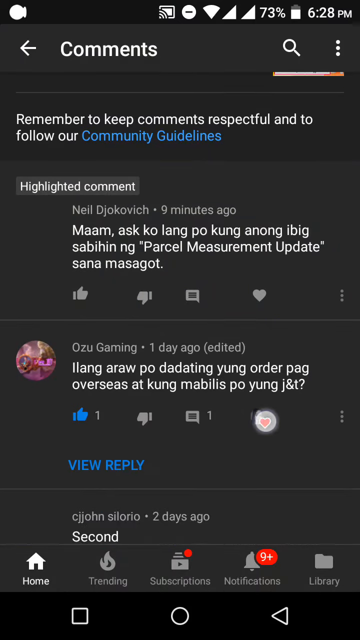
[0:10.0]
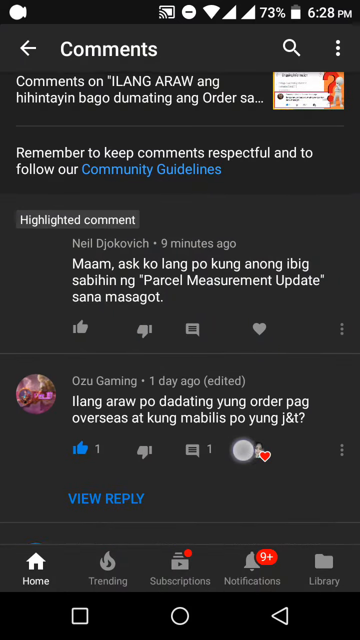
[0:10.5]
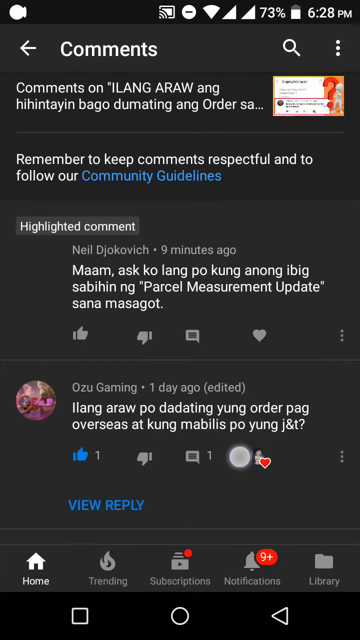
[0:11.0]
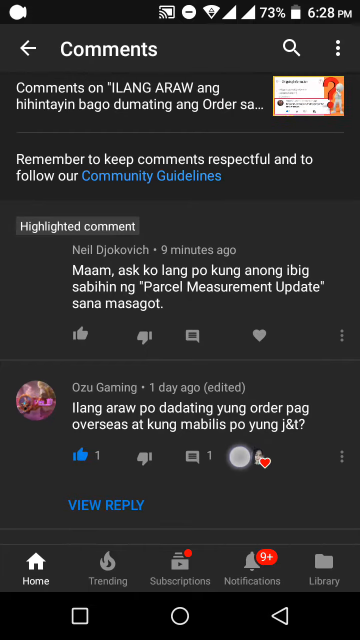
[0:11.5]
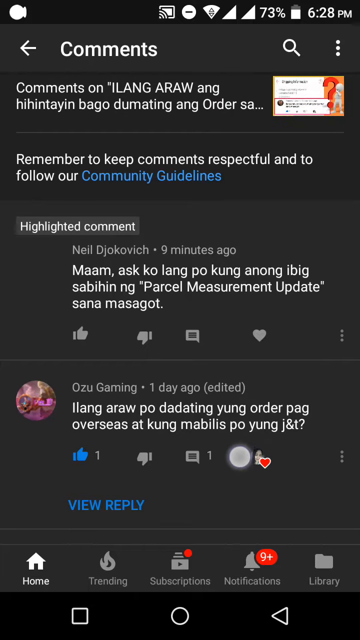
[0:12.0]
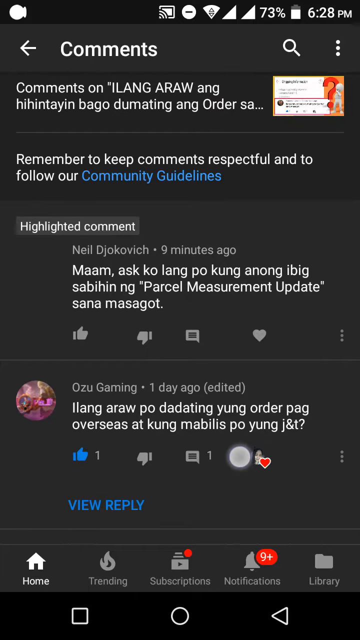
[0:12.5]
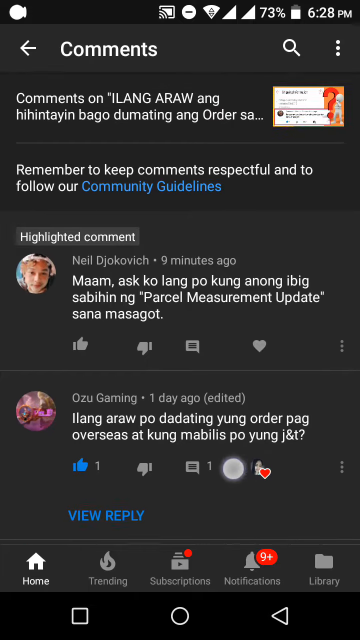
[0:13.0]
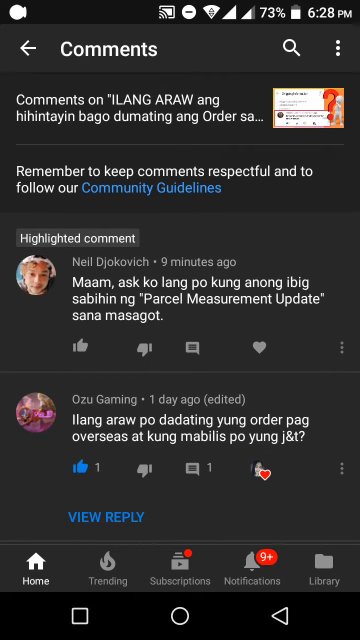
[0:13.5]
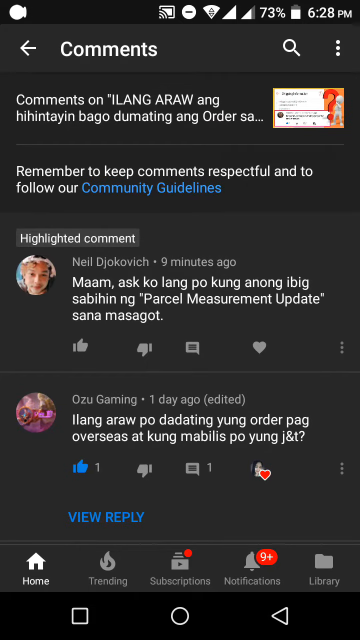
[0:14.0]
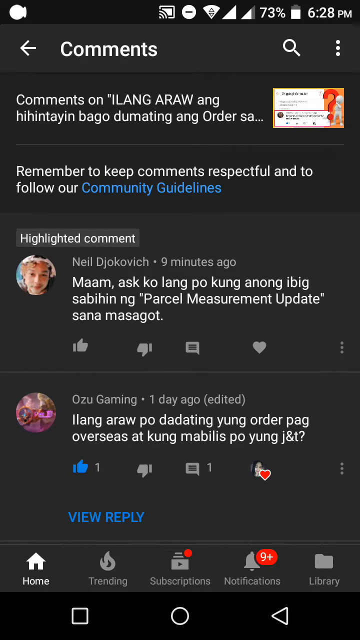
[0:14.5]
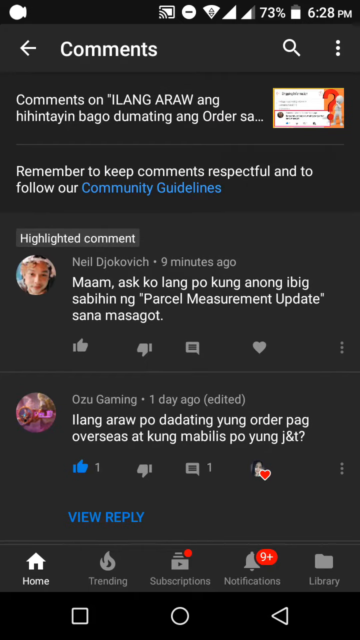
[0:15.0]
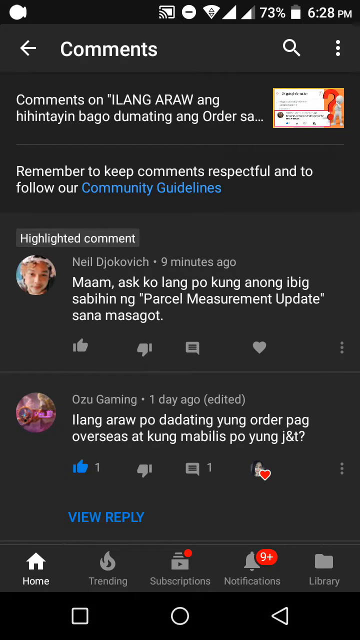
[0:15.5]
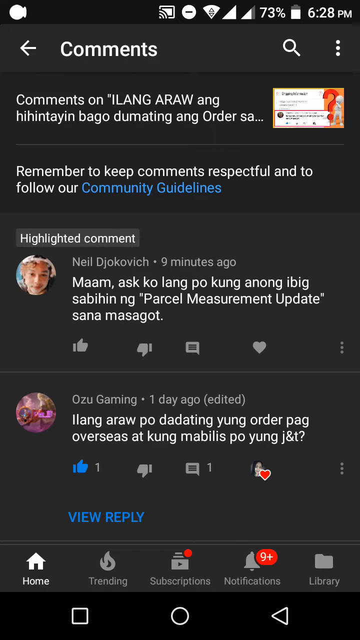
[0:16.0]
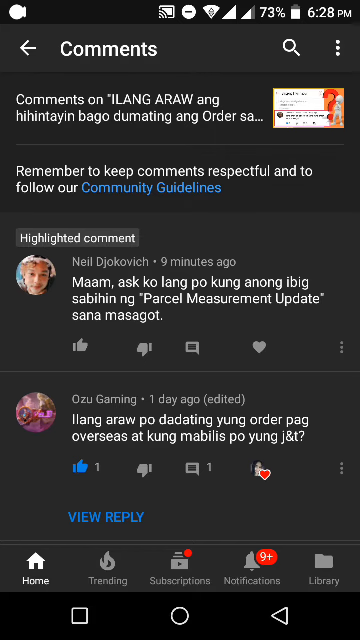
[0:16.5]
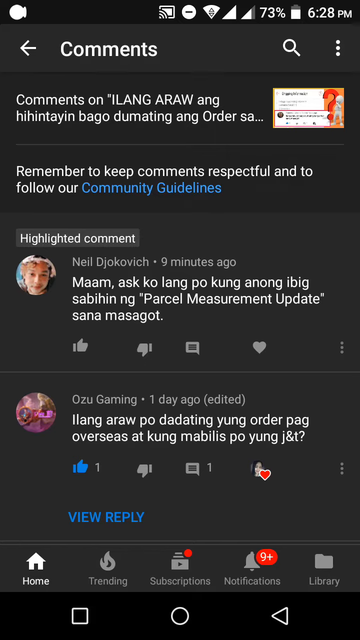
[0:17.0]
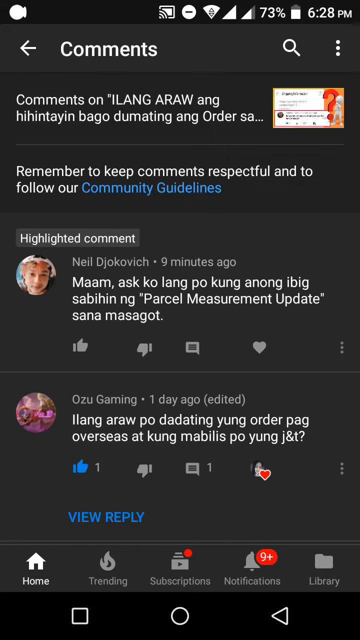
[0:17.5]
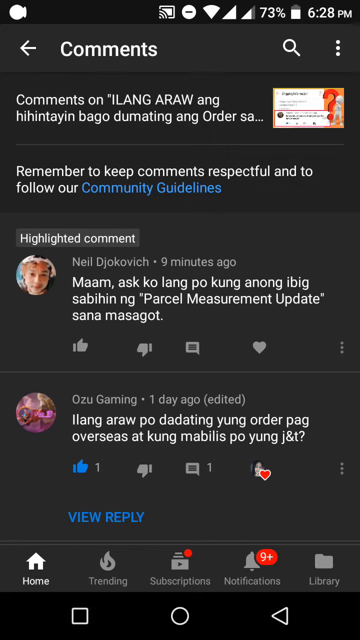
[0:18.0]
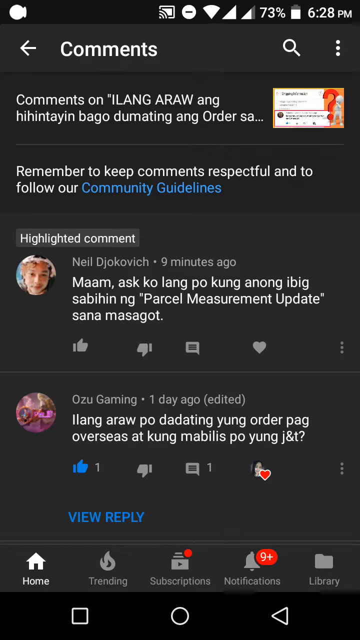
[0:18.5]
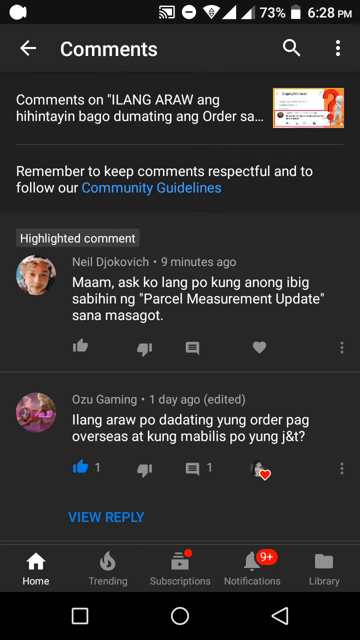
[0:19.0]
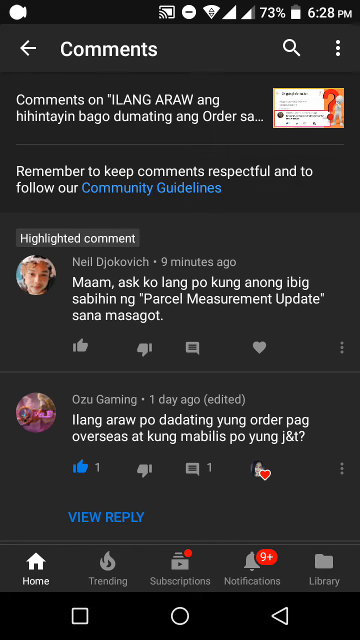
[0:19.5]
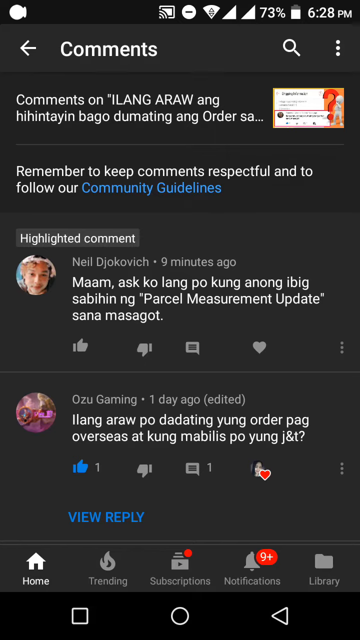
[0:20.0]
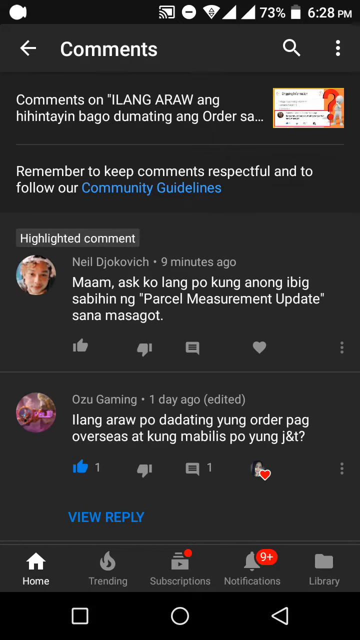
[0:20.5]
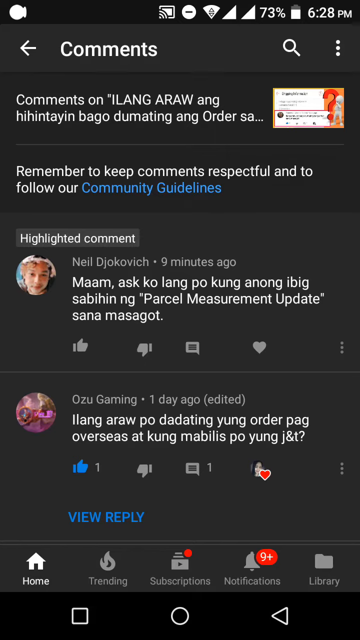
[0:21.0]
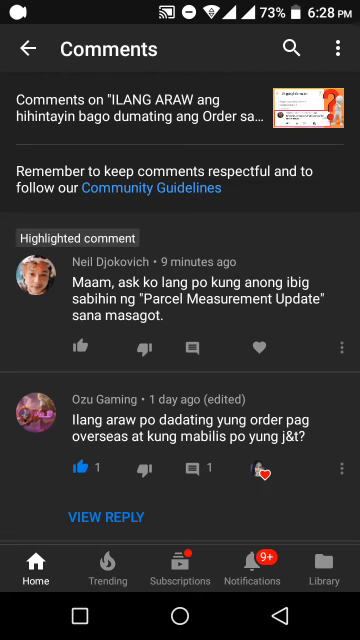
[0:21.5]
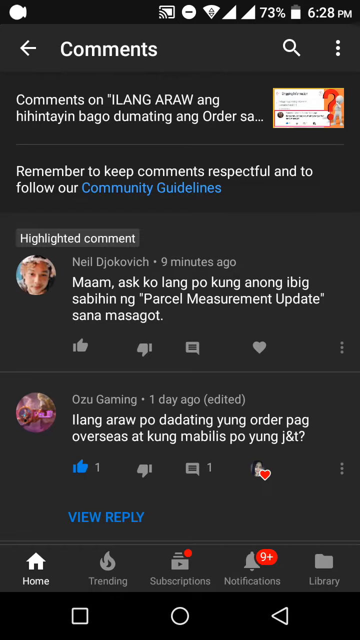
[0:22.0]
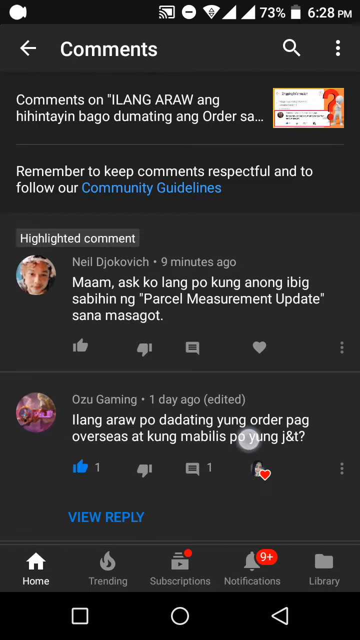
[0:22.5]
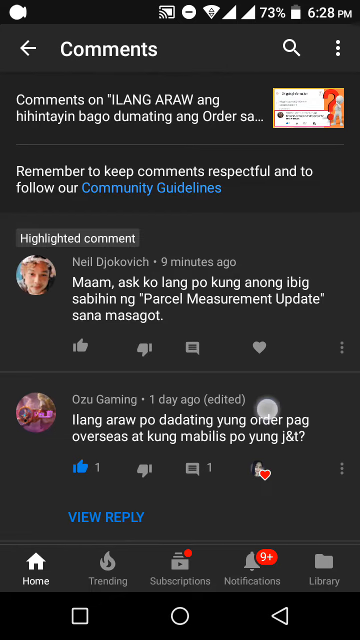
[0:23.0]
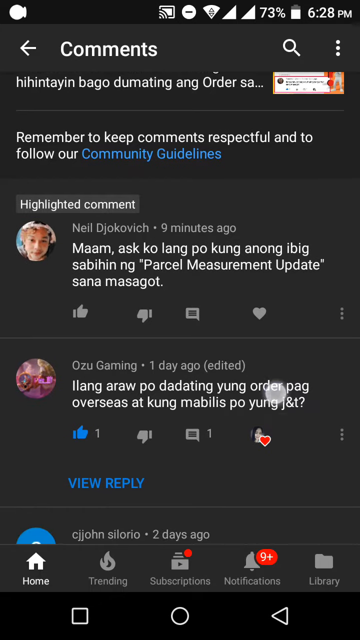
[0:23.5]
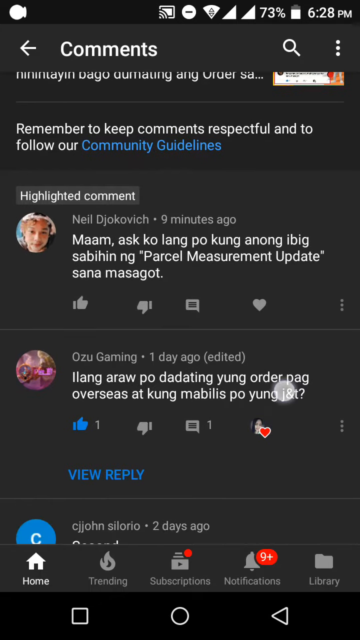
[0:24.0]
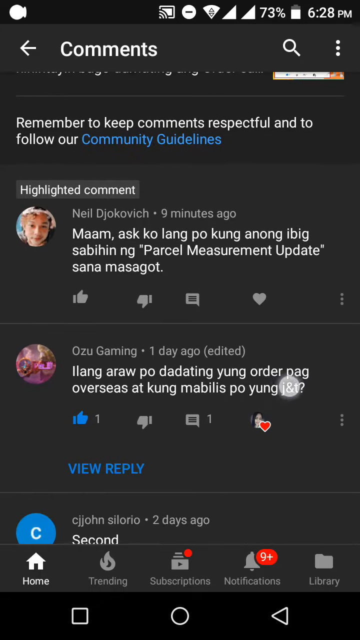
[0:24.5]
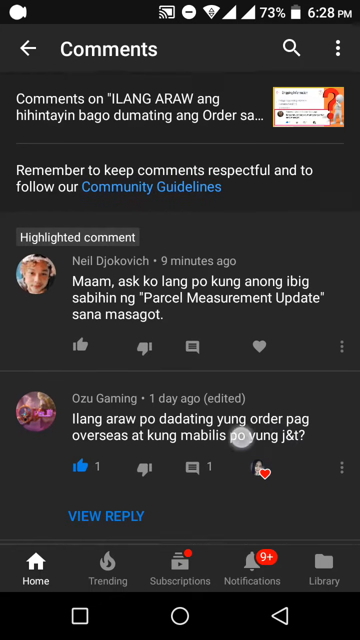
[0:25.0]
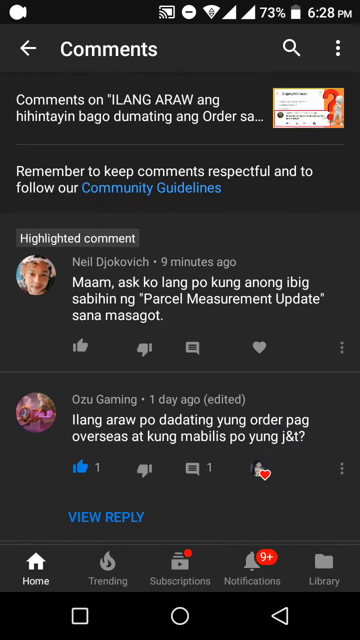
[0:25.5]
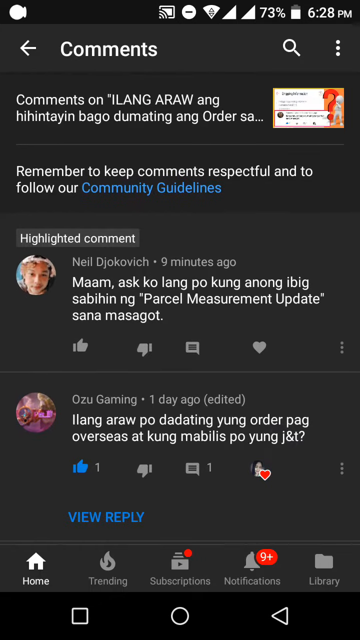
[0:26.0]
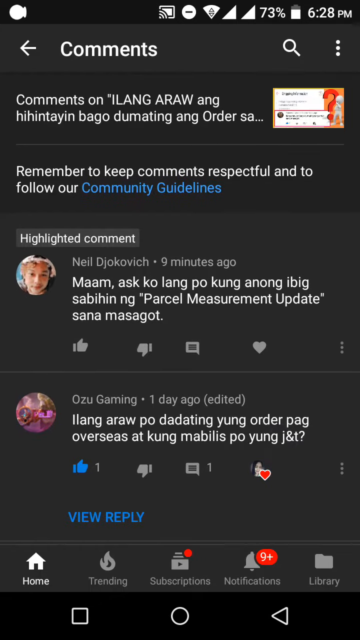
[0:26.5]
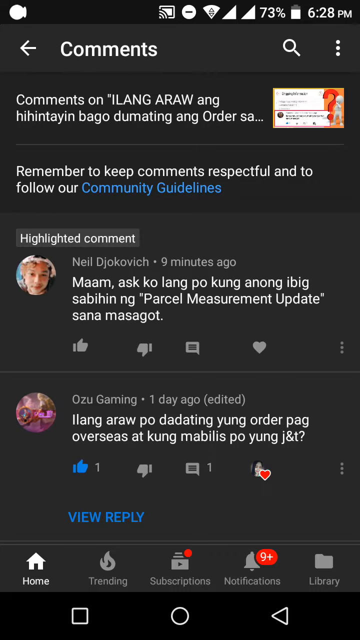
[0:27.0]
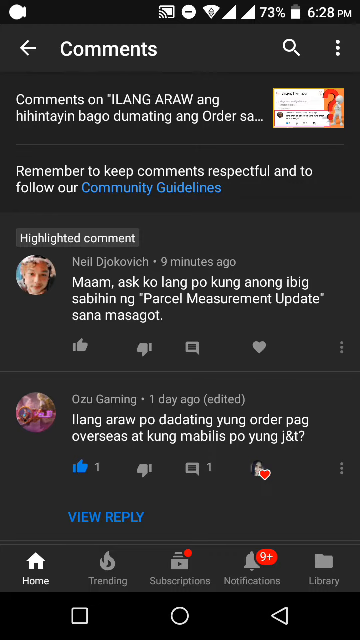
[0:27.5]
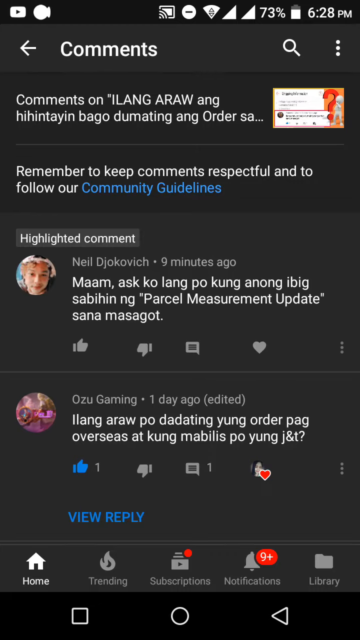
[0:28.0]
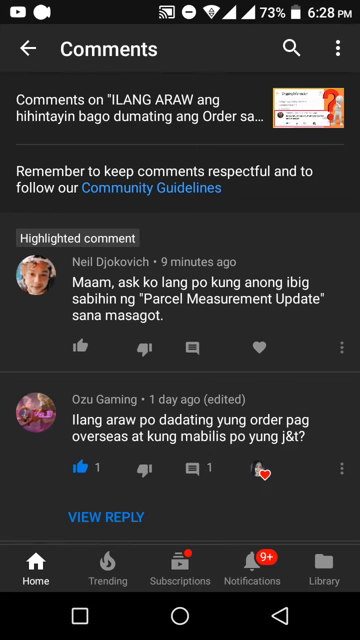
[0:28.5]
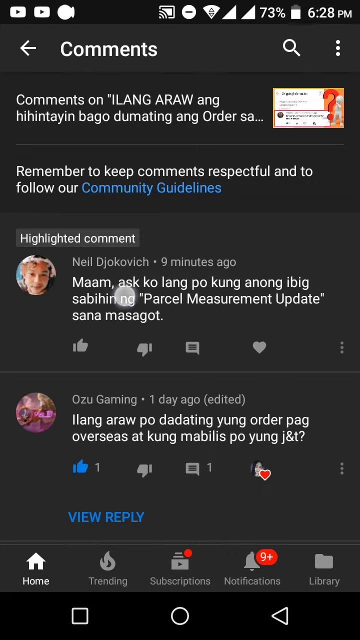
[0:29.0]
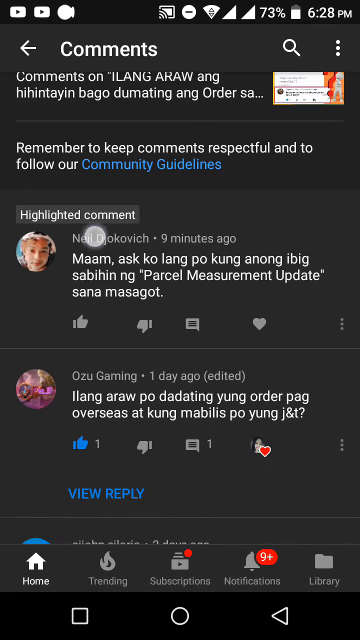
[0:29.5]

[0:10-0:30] A social media comments page is displayed on a mobile device. The screen is dark gray and all the text is white except for three words in blue: "community guidelines" and "view reply." From top to bottom, the word "comments" appears with a white back arrow to its left. Below that it says "remember to keep comments respectful and to follow our community guidelines." Next is a highlighted comment by a user named Neil Djokovic from nine minutes ago, written in a foreign language, and below it another comment by Ozu Gaming from one day ago, also in a foreign language. Below that is "view reply." The screen scrolls slightly downward and pauses, then scrolls slightly upward and pauses, still showing the comments from the two users.